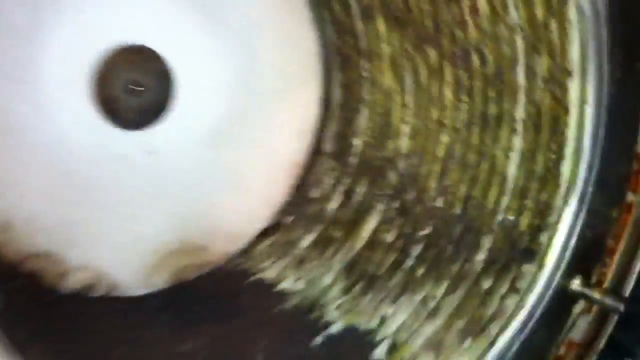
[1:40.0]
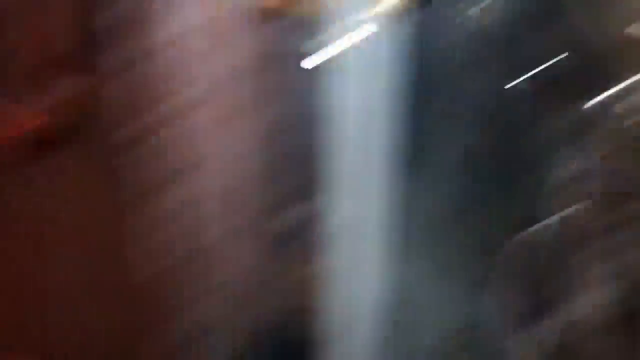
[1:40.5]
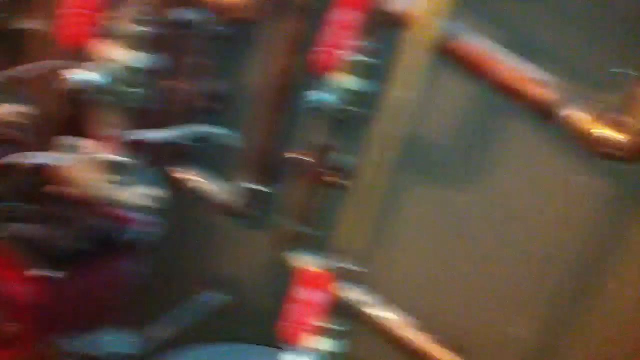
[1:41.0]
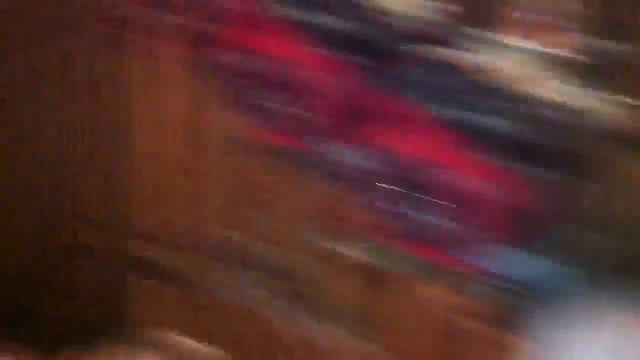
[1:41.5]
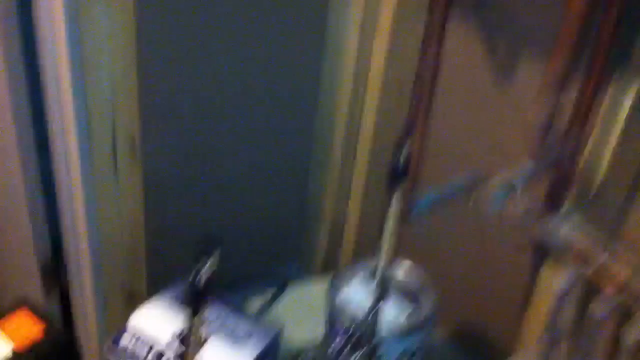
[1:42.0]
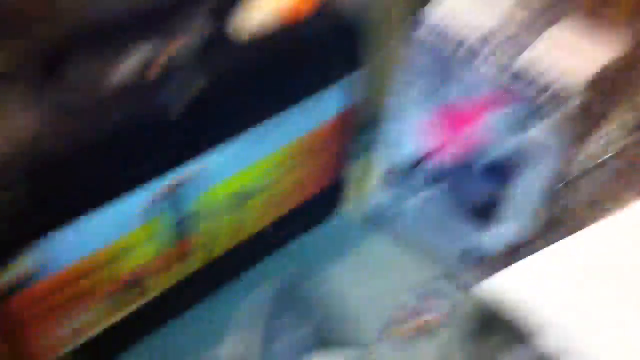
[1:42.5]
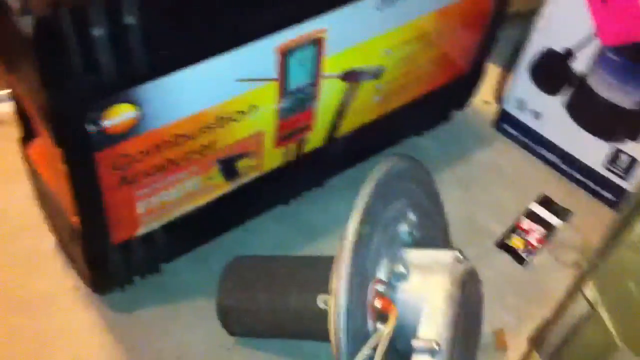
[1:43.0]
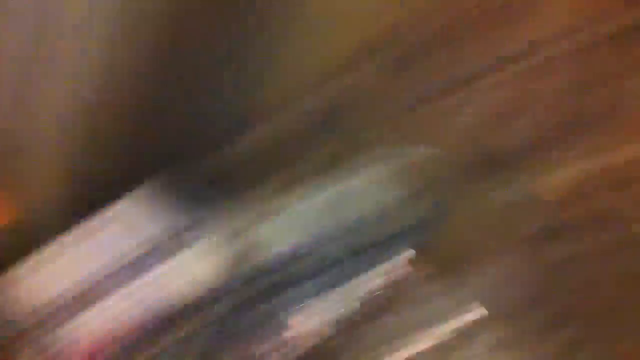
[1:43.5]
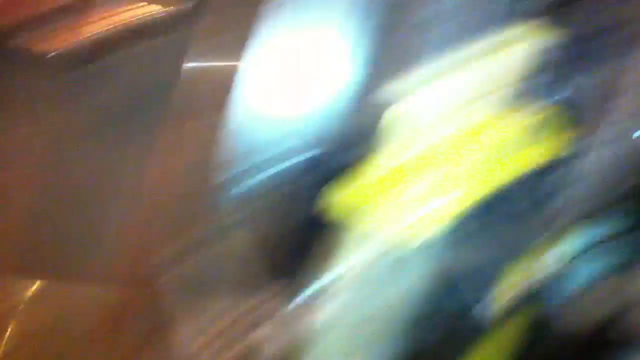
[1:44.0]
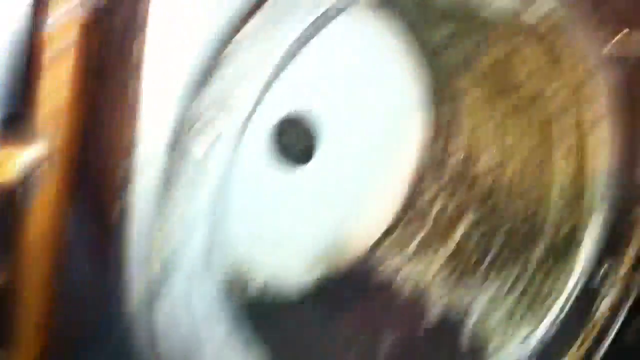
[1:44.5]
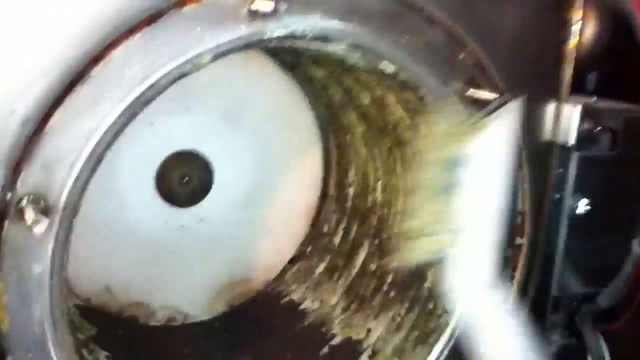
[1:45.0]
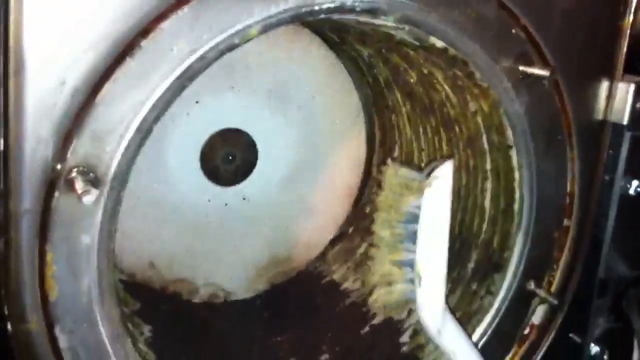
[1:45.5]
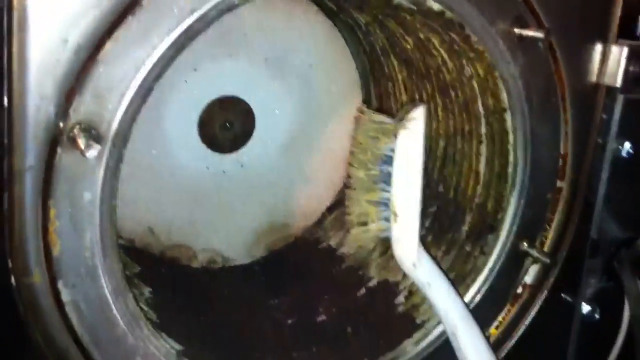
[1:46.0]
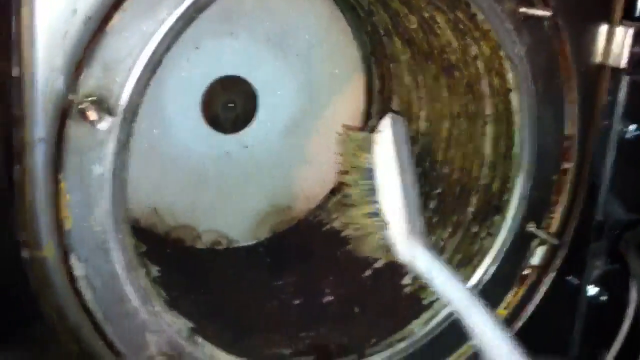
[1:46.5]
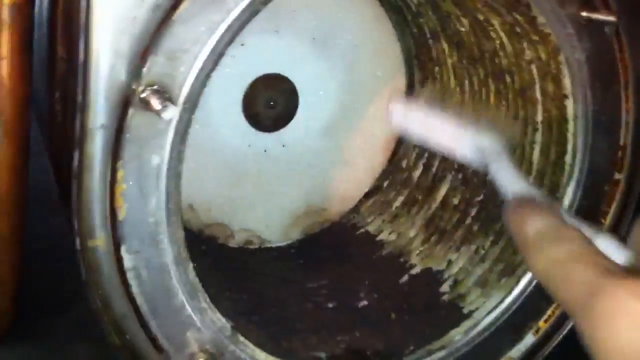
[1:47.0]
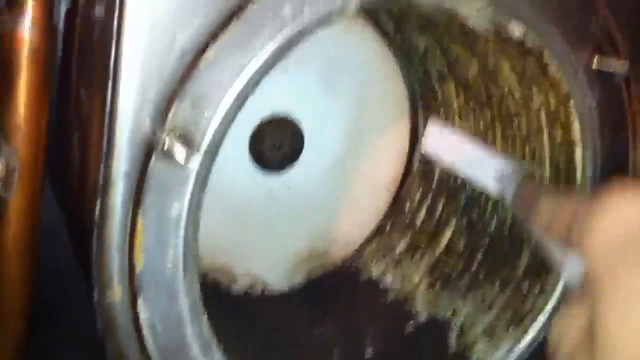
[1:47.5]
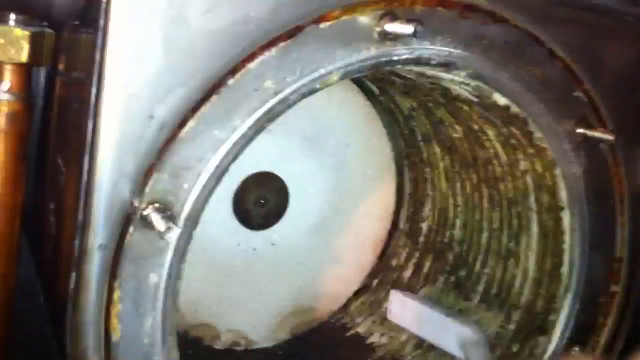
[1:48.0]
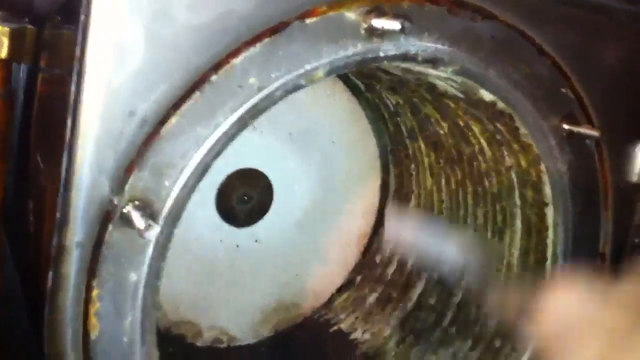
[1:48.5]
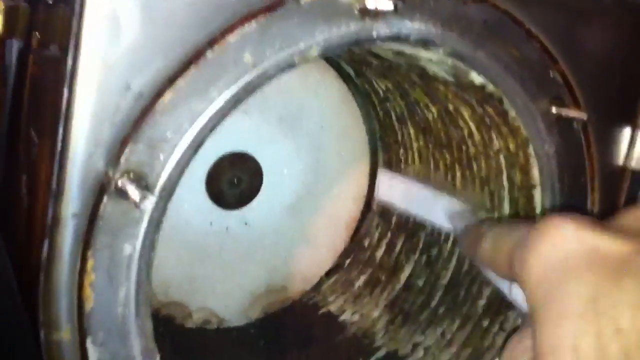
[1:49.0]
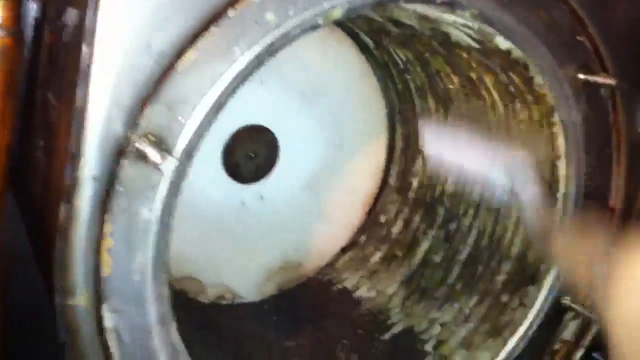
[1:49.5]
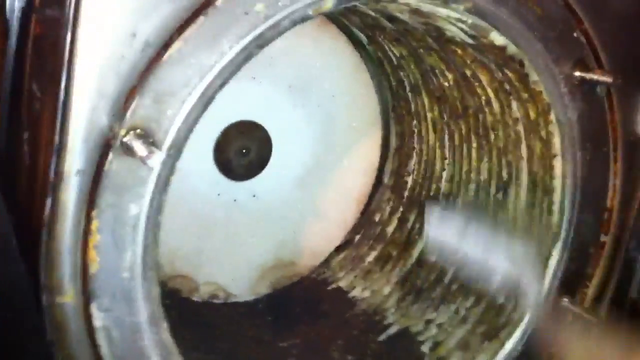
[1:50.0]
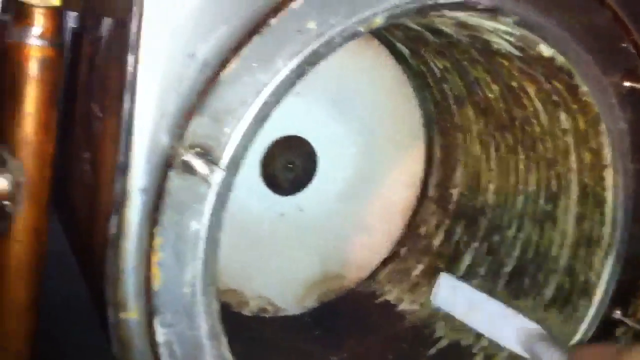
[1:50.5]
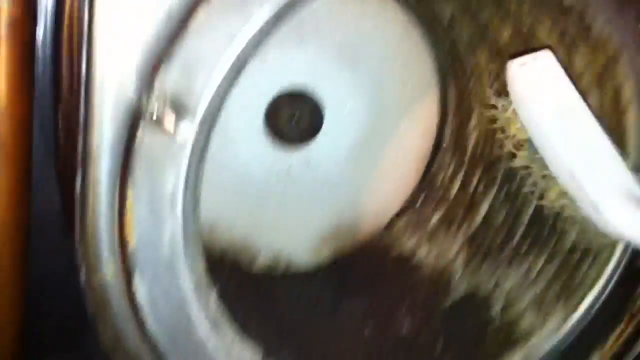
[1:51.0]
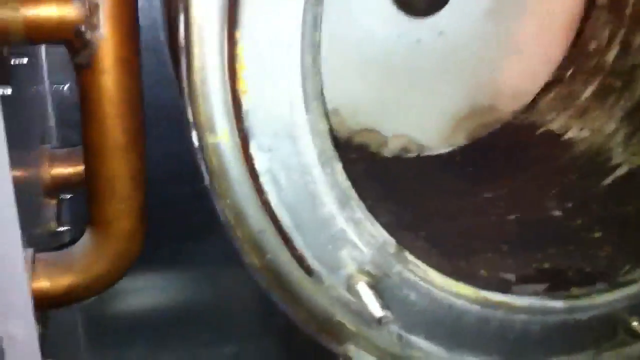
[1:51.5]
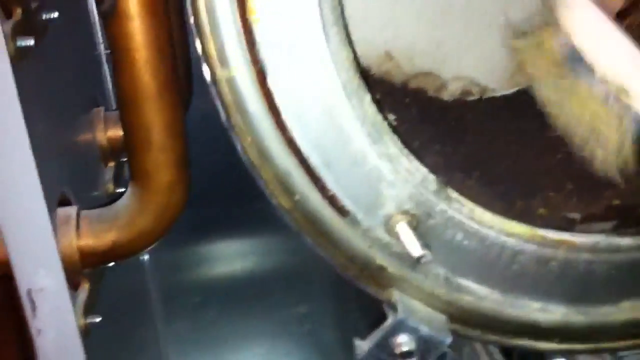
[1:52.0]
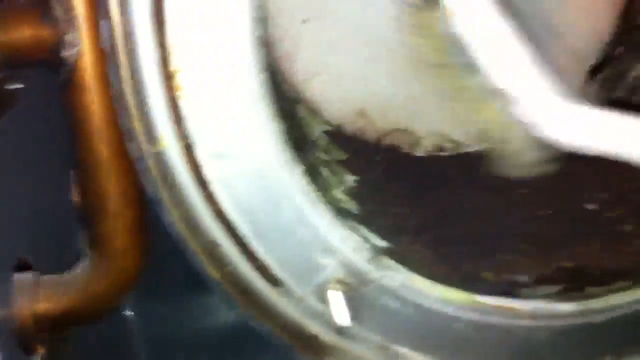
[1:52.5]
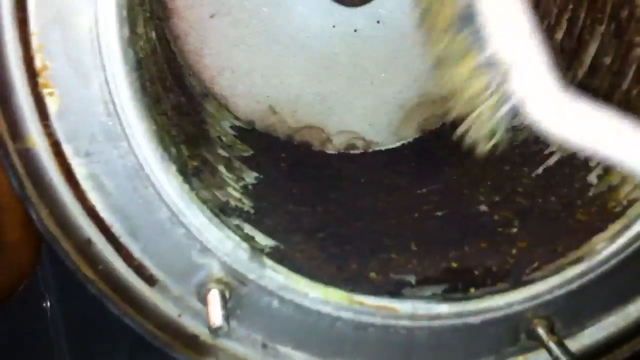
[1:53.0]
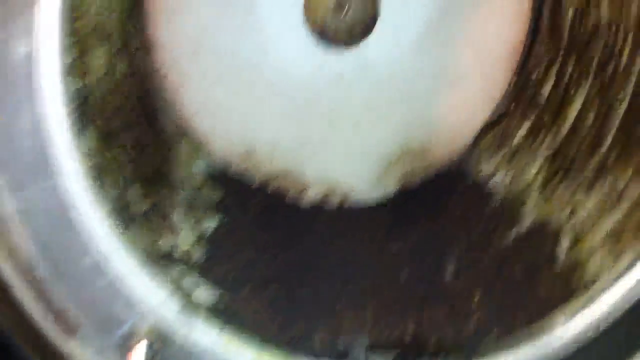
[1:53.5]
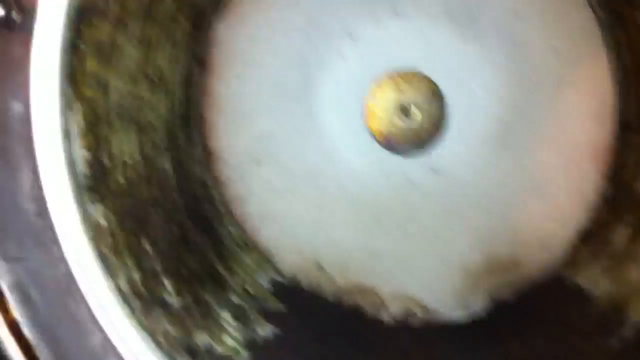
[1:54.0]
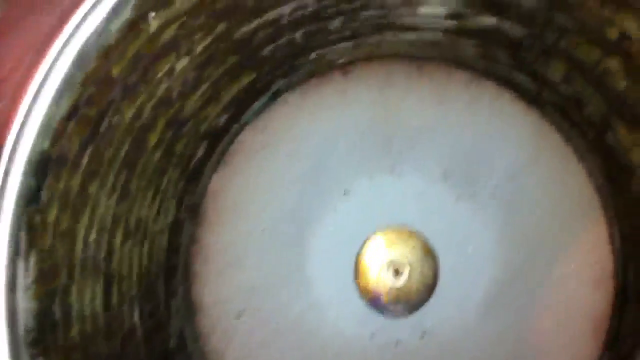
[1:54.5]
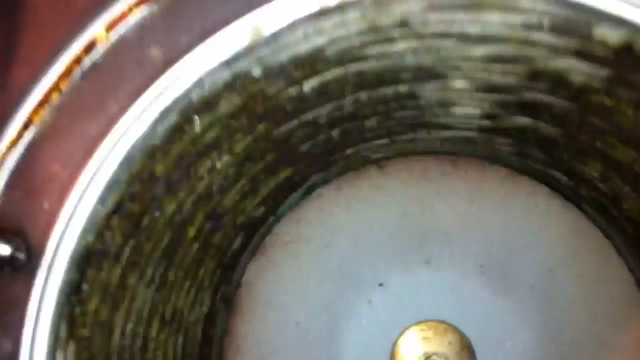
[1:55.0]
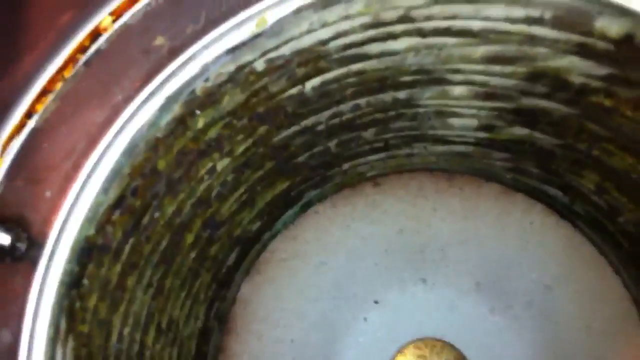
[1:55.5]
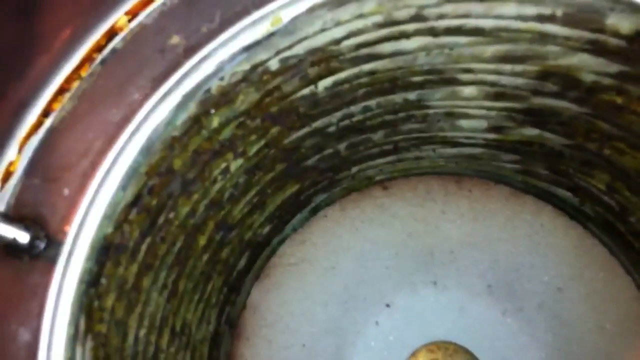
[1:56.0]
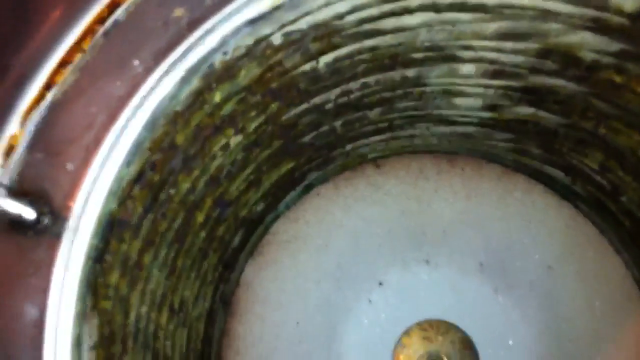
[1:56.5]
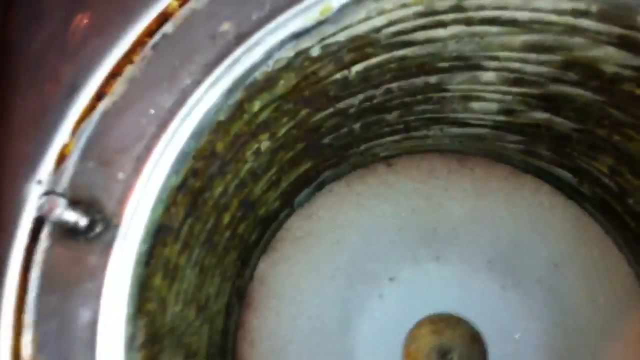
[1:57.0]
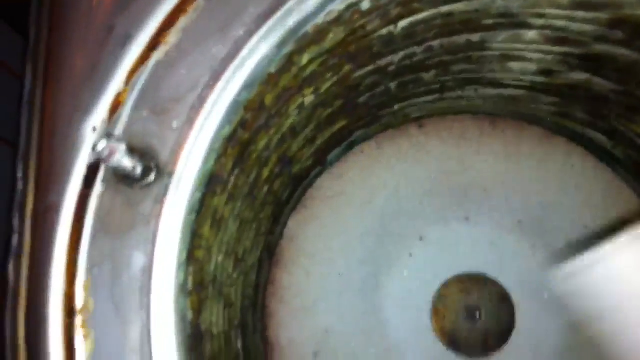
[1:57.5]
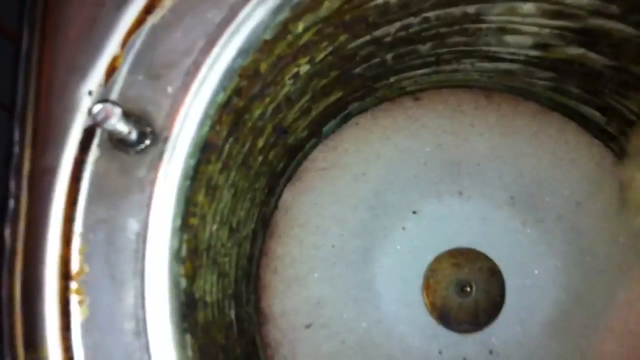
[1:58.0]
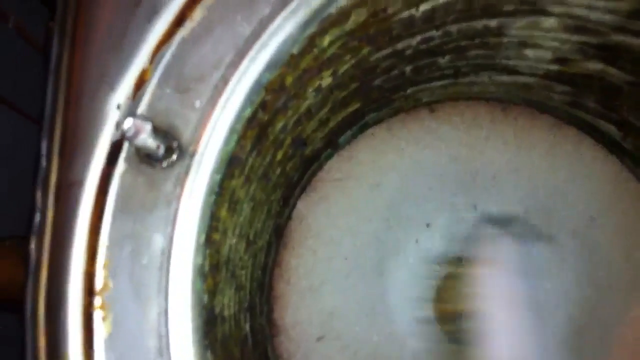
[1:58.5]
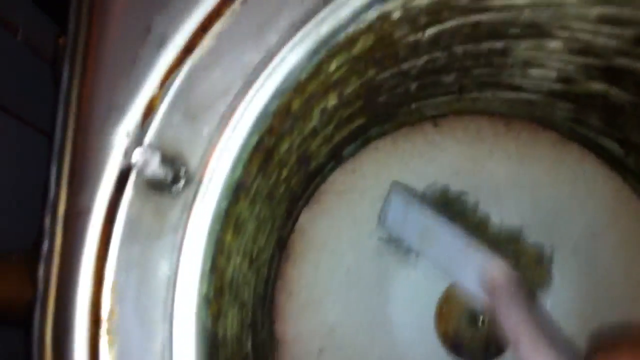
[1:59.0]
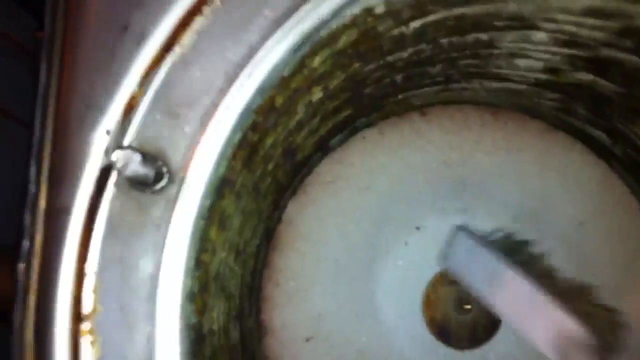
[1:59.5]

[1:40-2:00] He is still looking inside the silver container of the machine, which is really dirty with grime and mold. He looks at the table and then back inside. He now has a big brush and goes around scrubbing with it, without much effort. Nothing really comes off, and the scrubbing makes no visible change.